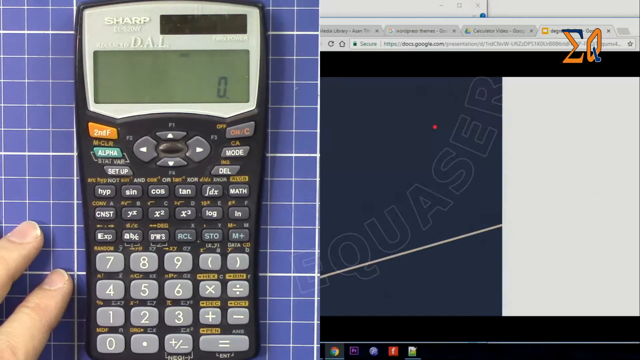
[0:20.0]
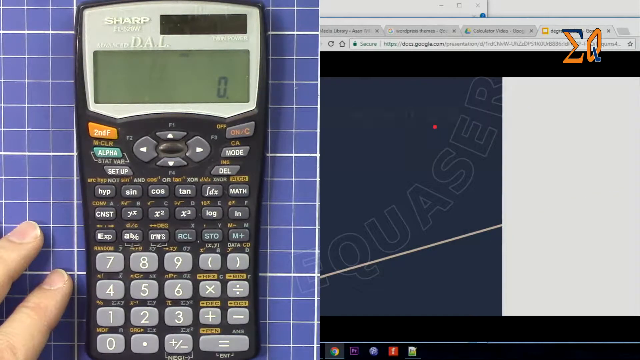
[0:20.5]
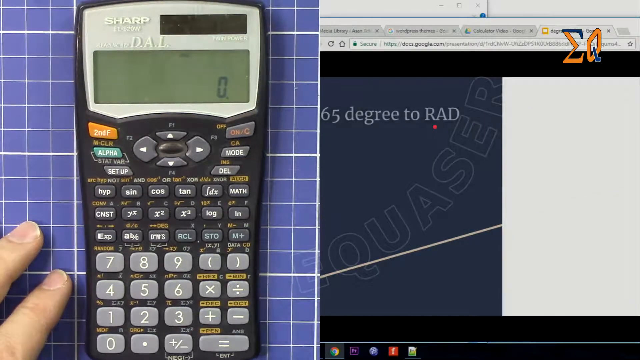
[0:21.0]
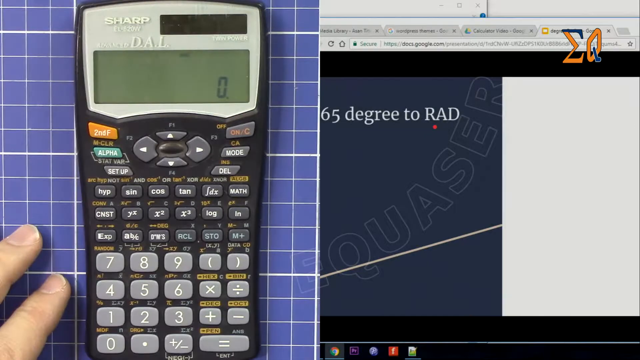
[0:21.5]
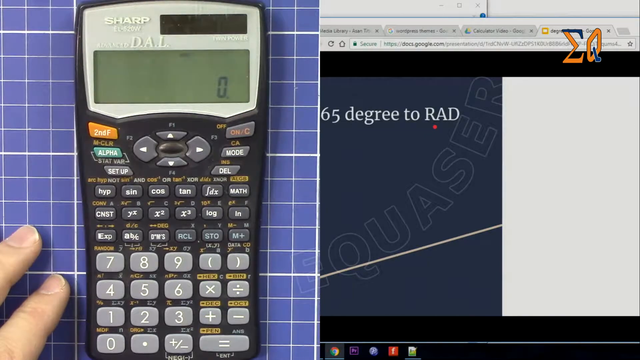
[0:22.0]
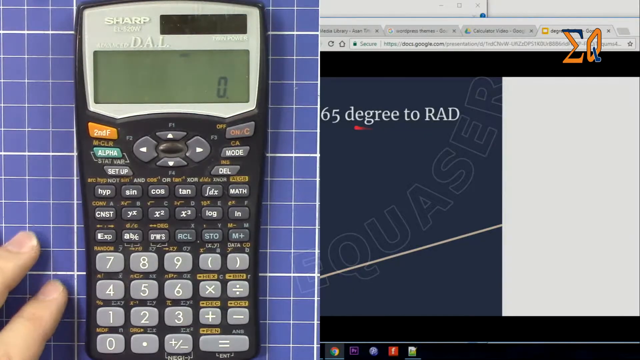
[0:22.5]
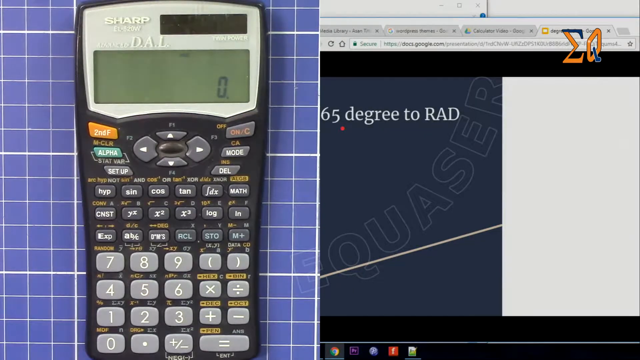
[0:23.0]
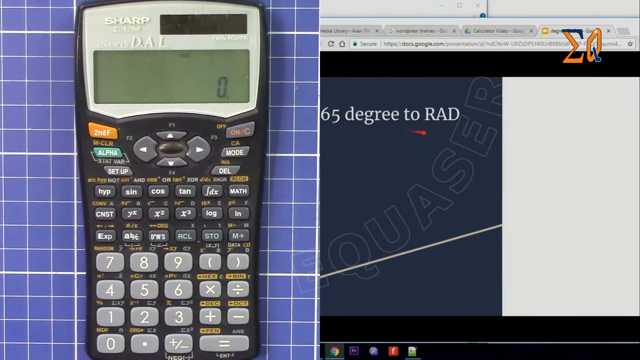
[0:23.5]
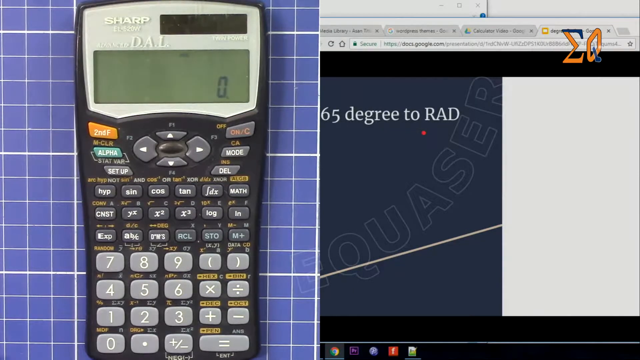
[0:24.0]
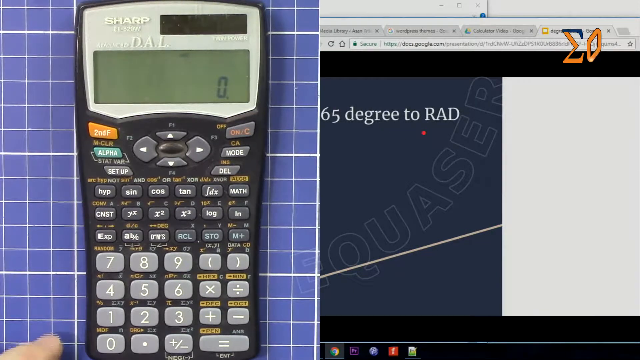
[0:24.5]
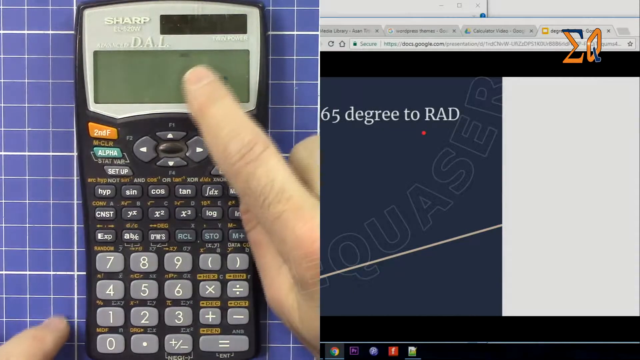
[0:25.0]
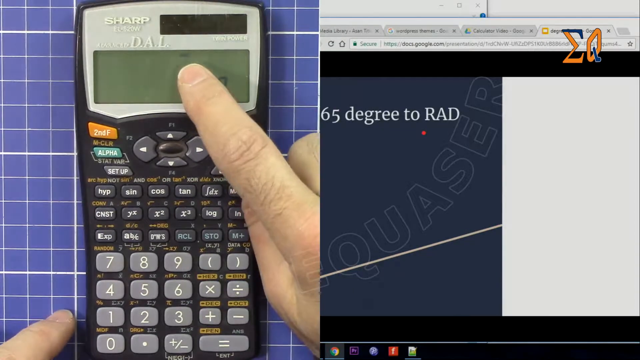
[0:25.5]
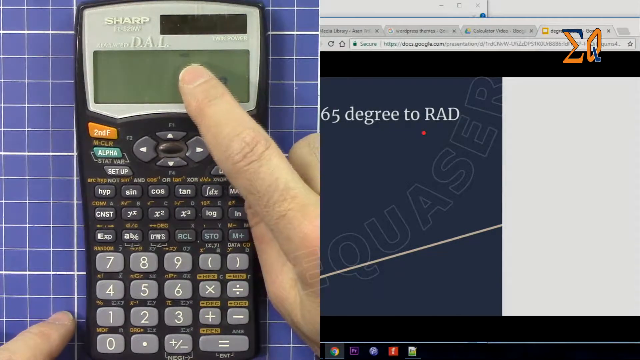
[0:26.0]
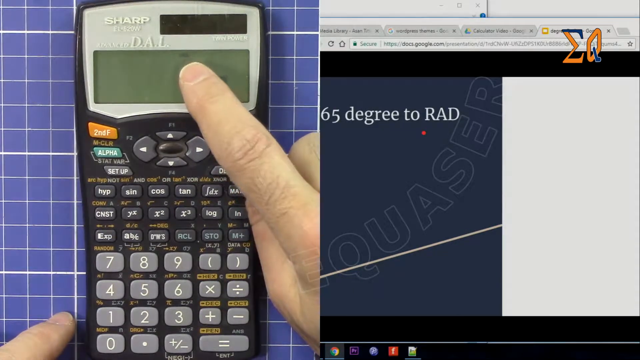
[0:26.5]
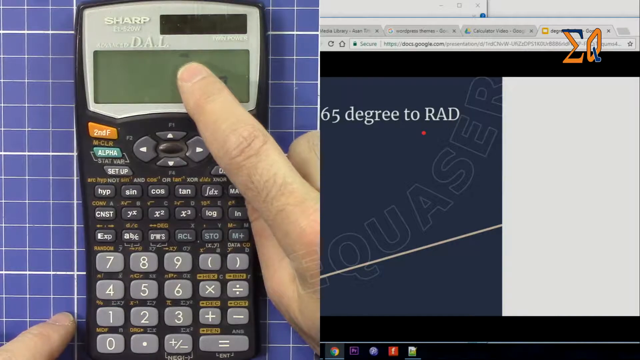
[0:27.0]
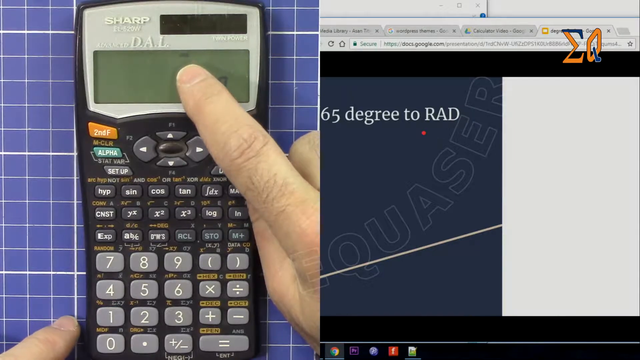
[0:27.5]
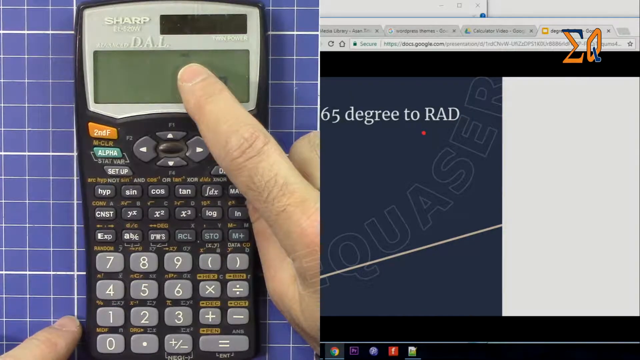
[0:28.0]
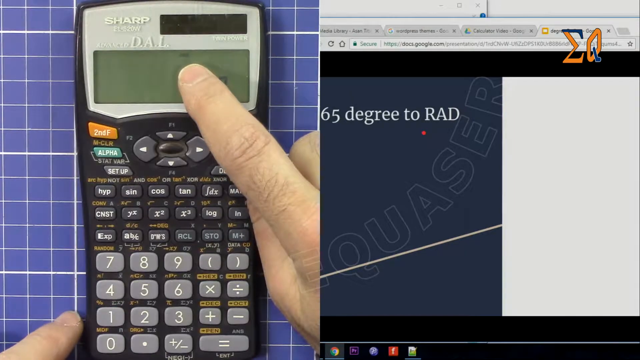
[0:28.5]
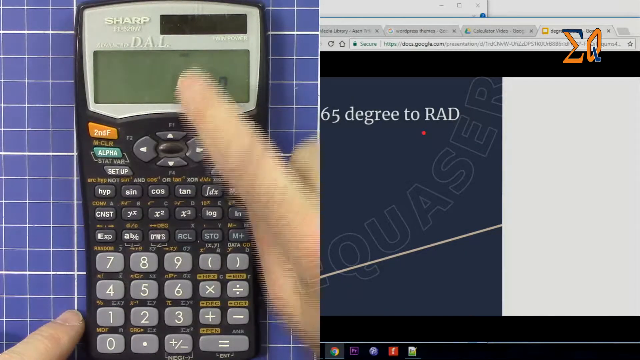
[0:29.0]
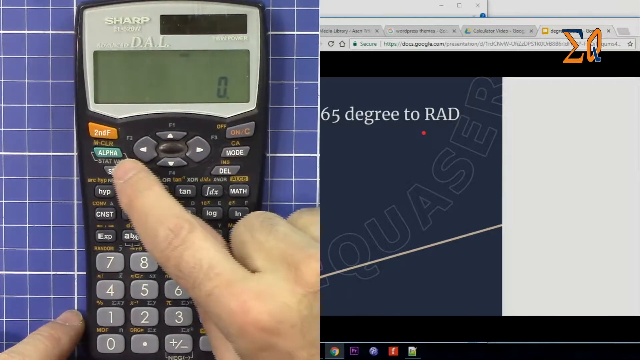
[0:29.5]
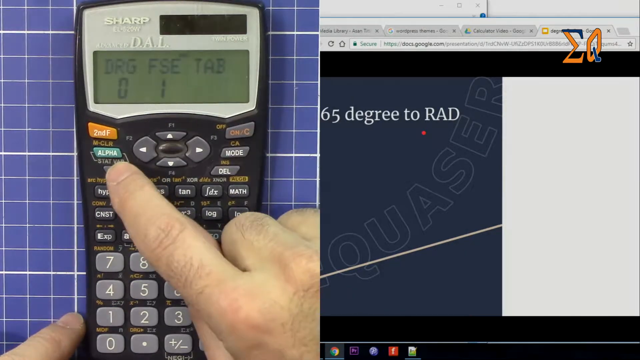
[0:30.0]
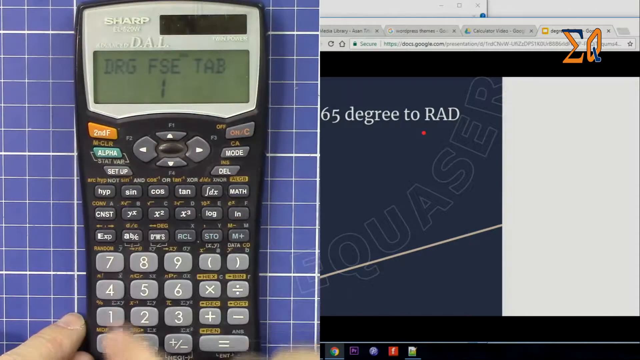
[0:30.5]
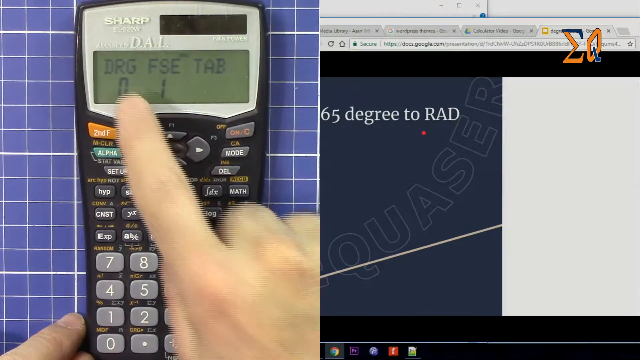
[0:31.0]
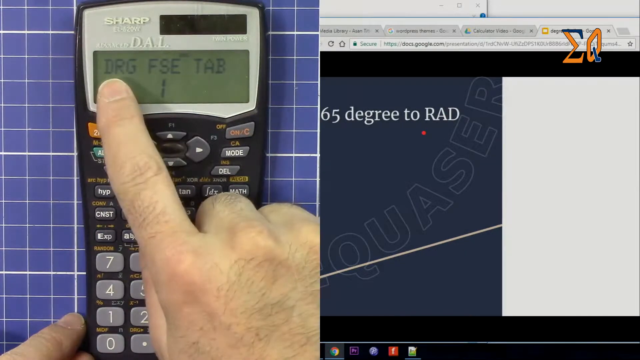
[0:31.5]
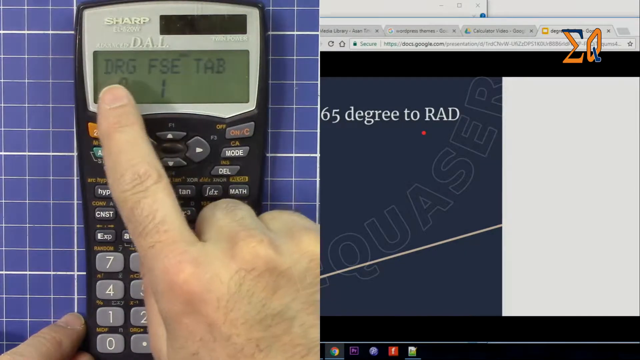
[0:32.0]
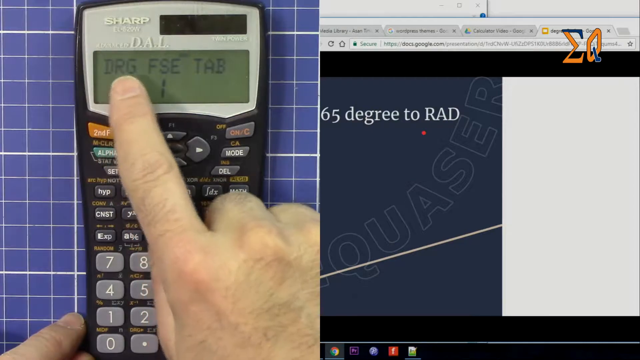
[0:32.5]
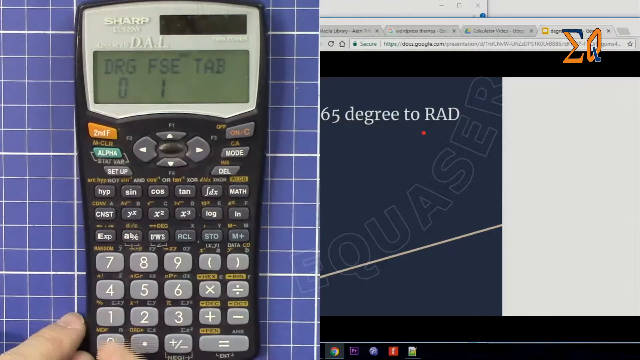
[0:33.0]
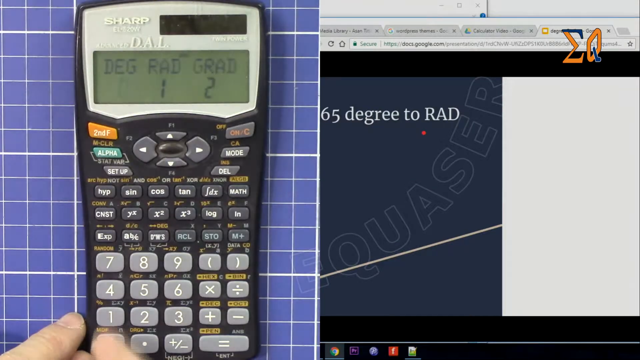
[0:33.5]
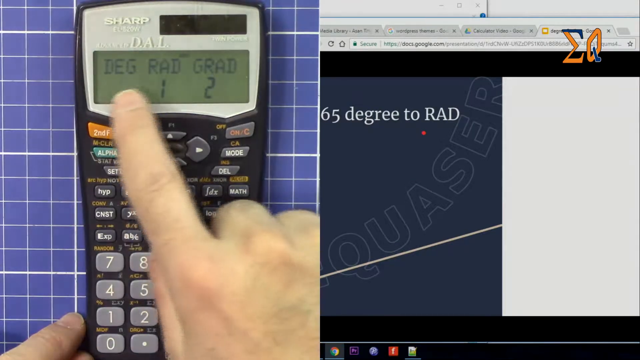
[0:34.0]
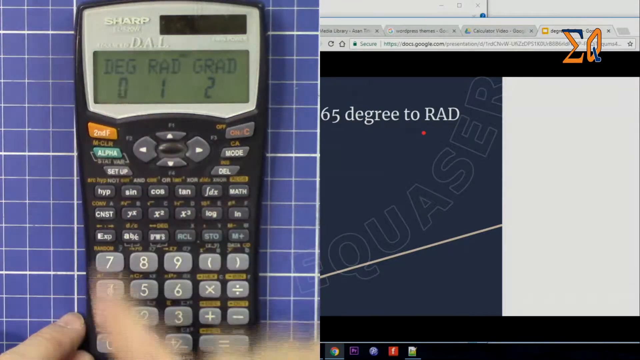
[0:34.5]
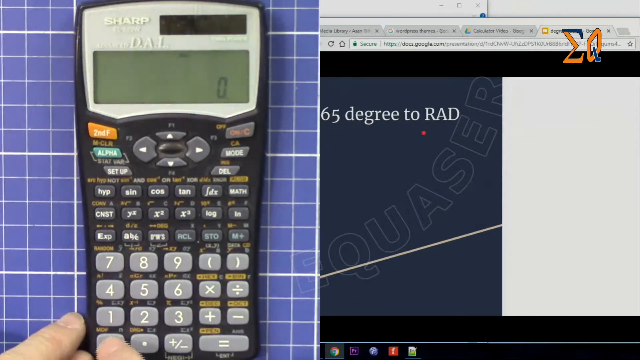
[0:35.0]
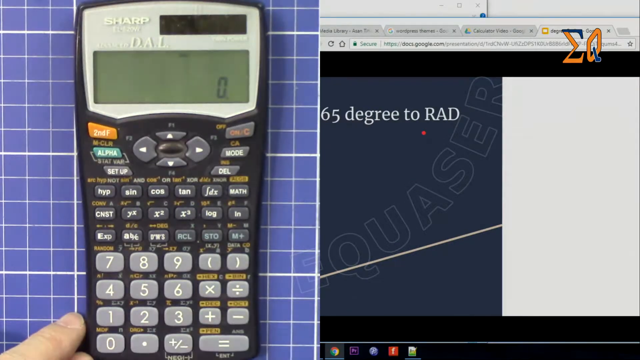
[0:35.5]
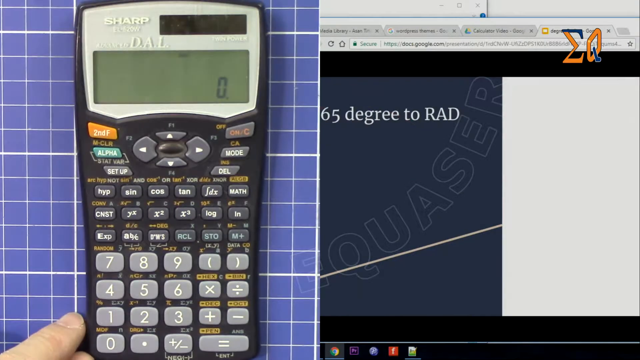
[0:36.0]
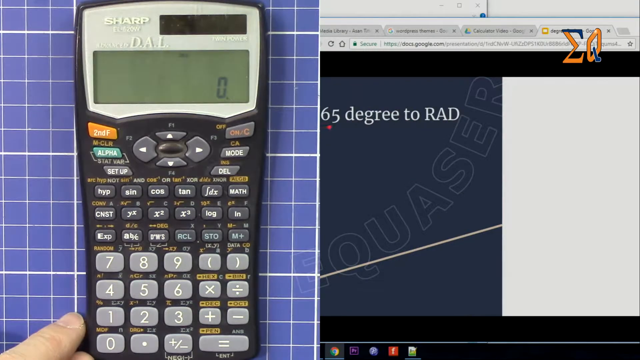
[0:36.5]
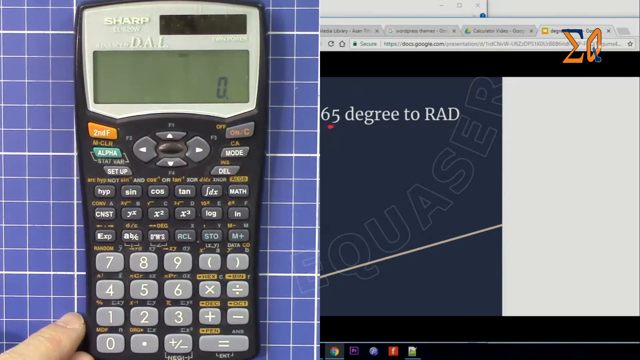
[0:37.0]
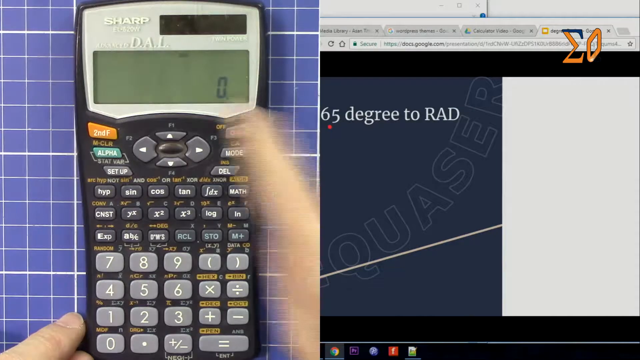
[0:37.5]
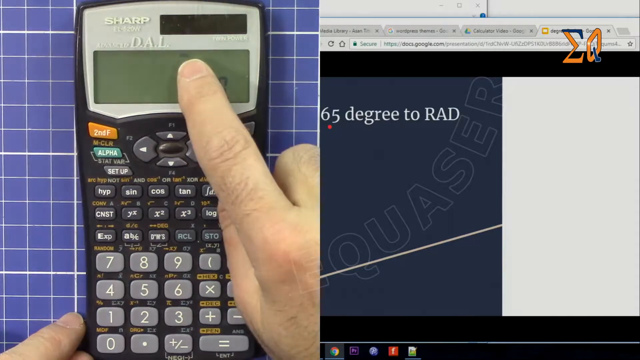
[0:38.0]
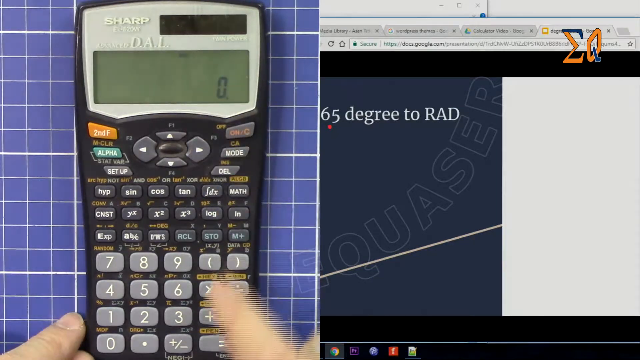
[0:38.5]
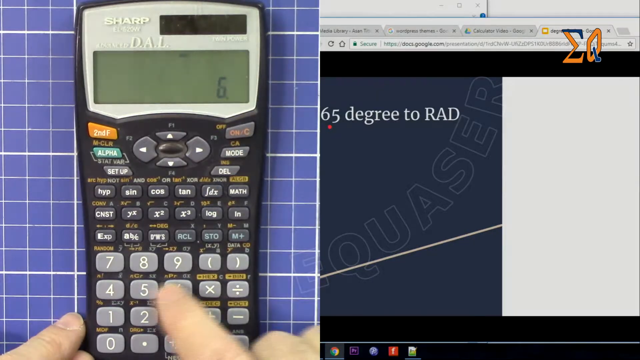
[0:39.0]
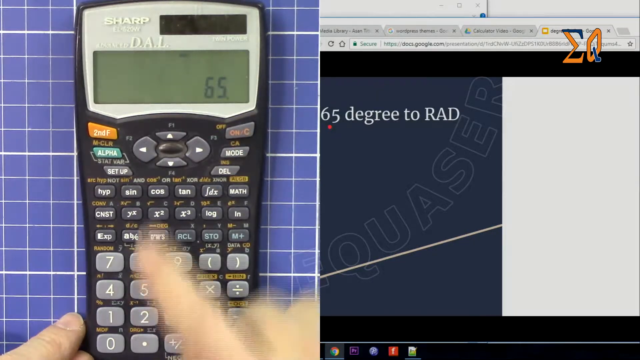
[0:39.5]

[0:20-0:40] On the right-side image, the half coming from the right is a white background, and then there is a dark blue background. Across the top in white is "65 degree to rad", and "quasar" runs from just above the bottom left, angling up to the right corner. A red dot appears on the right side underneath "65 degree to rad". The hand goes off the left side, and the red dot zooms over. A pointer finger comes in from the right side, touching the screen and pointing to small print at the top of the calculator. It then goes down and presses the third button down on the left side, which brings up information on the screen: across the top is "DRG" with a 0 under it, "FSE" with a 1 under it, and "TAB" with nothing under it. The pointer finger points at this and moves down. The display then shows "DEG" with 0, "rad" with 1, and on the right side "grad" with 2 under it. The display then clears back to zero.